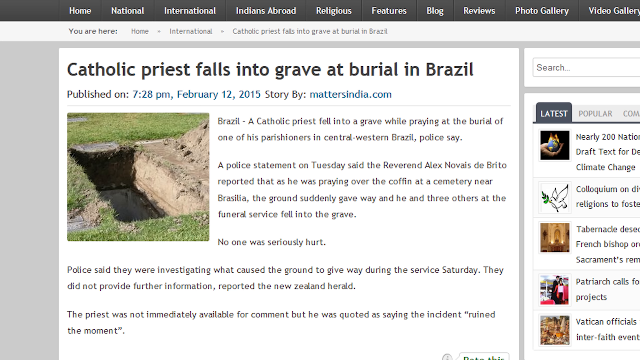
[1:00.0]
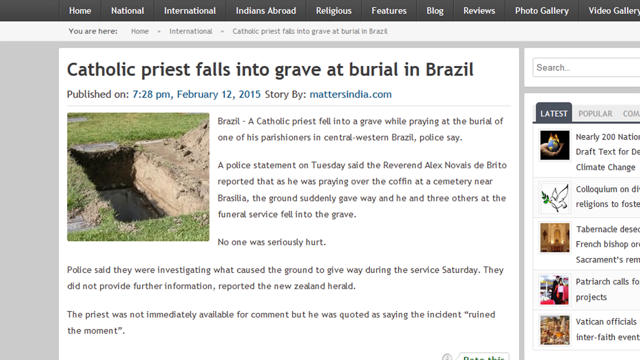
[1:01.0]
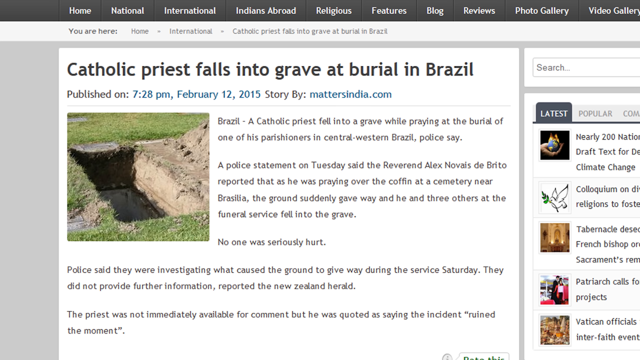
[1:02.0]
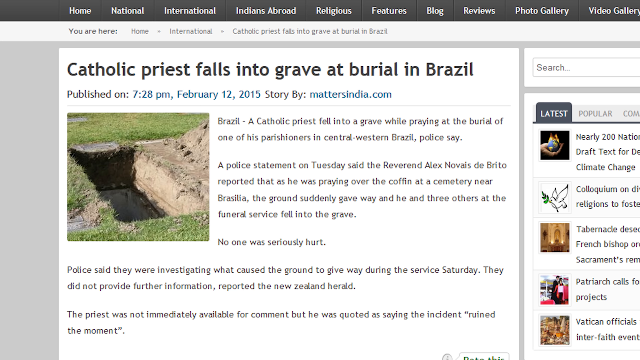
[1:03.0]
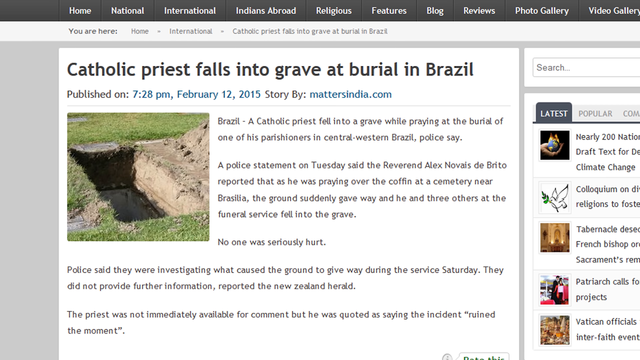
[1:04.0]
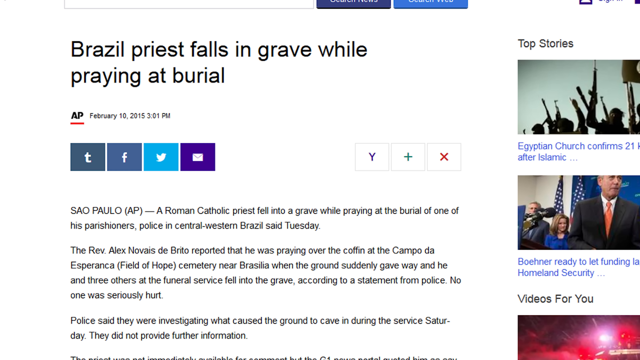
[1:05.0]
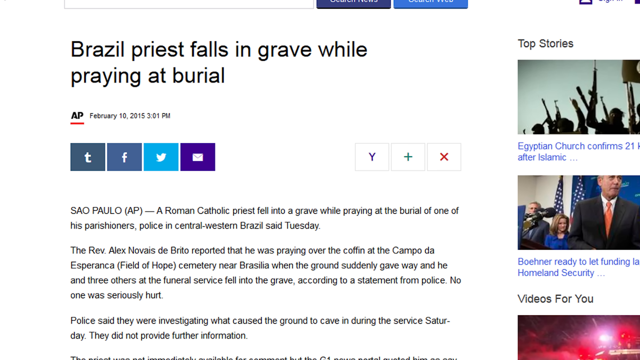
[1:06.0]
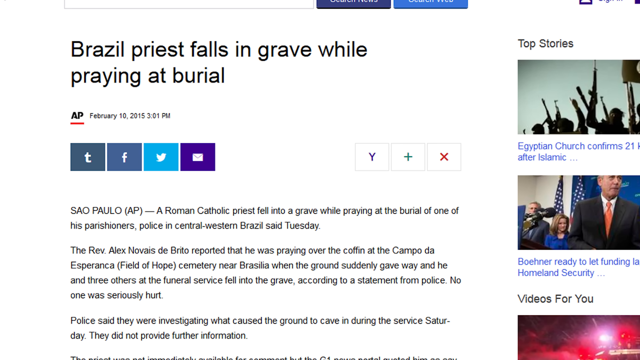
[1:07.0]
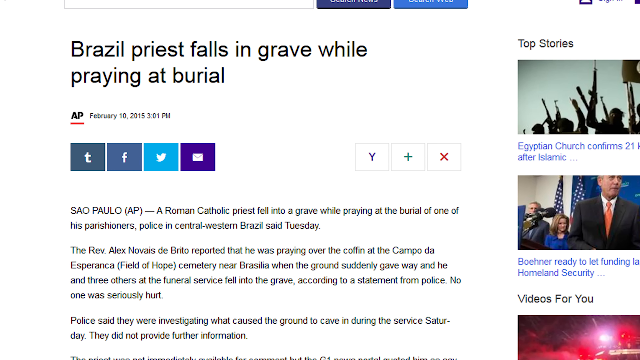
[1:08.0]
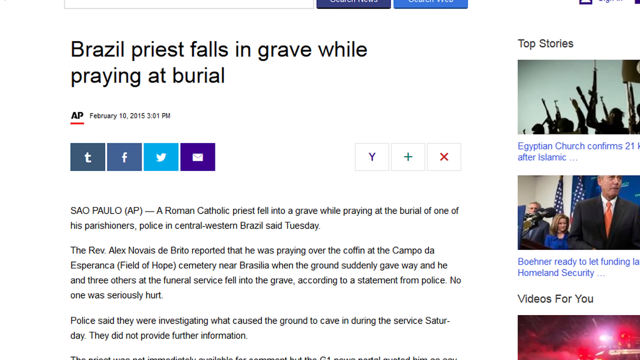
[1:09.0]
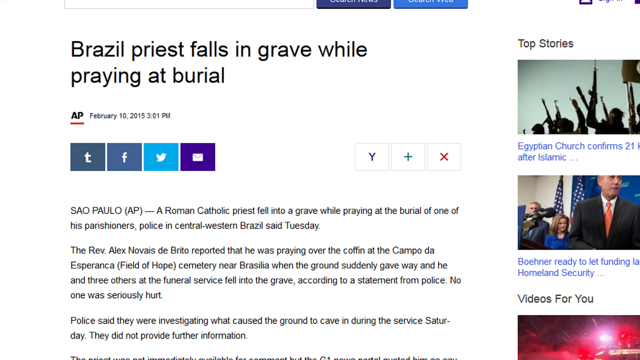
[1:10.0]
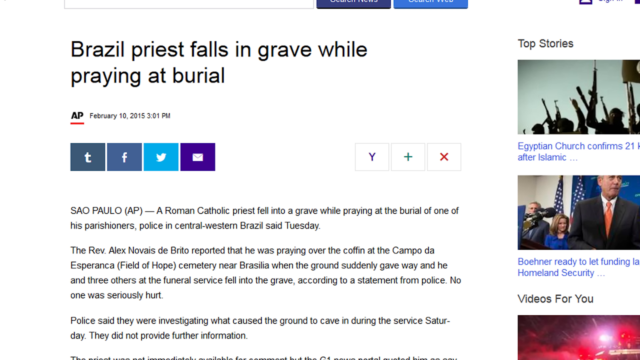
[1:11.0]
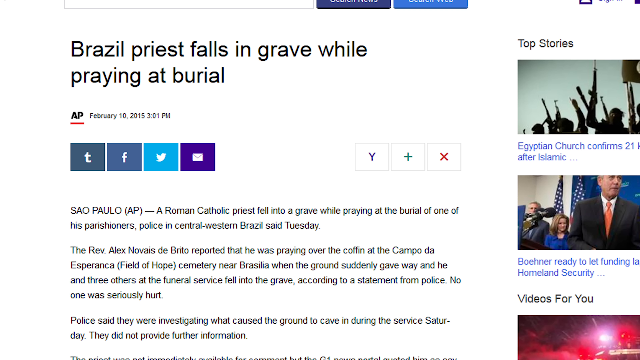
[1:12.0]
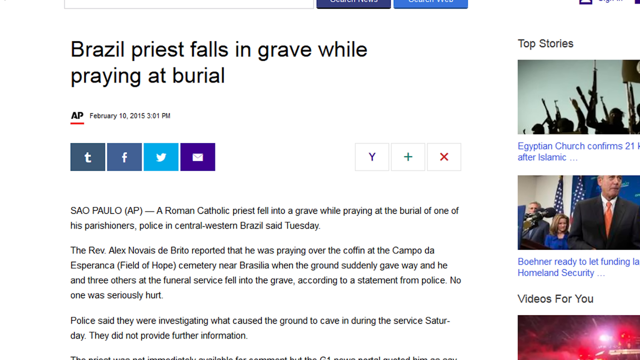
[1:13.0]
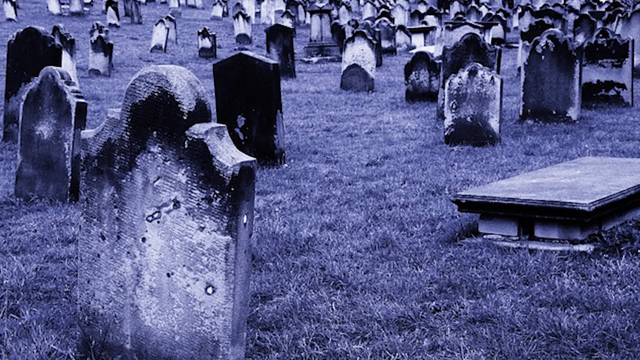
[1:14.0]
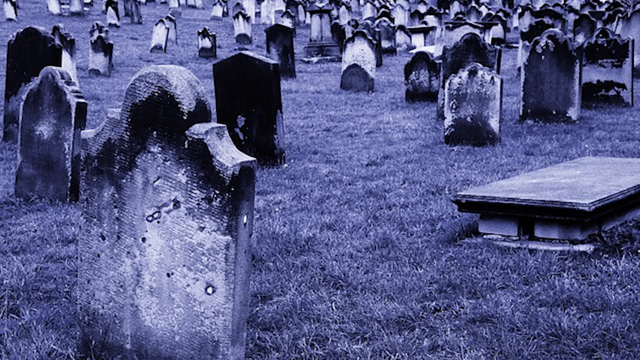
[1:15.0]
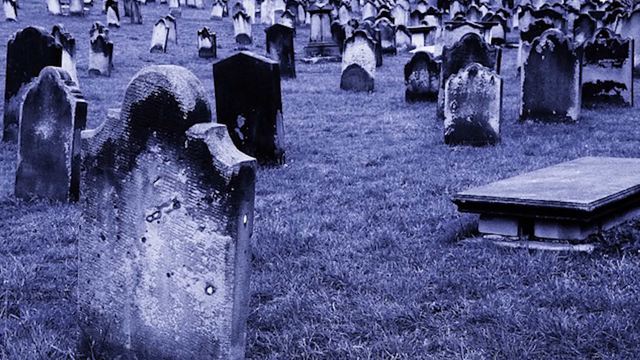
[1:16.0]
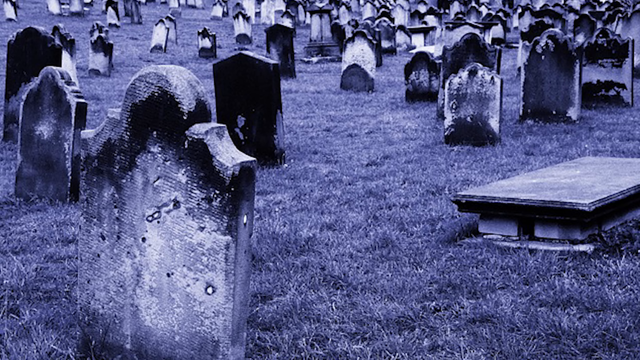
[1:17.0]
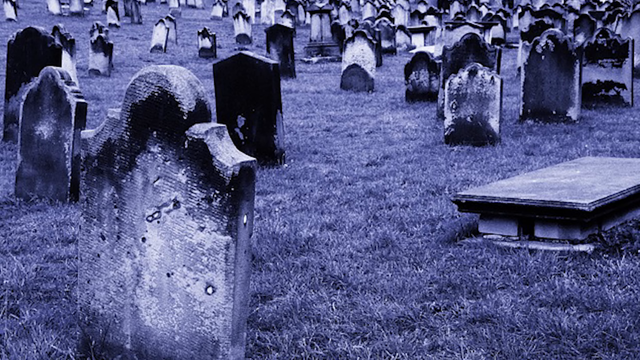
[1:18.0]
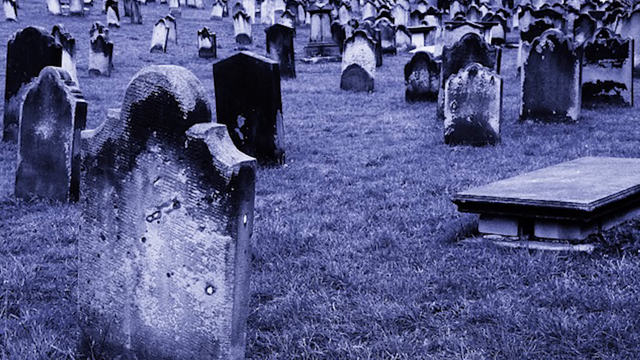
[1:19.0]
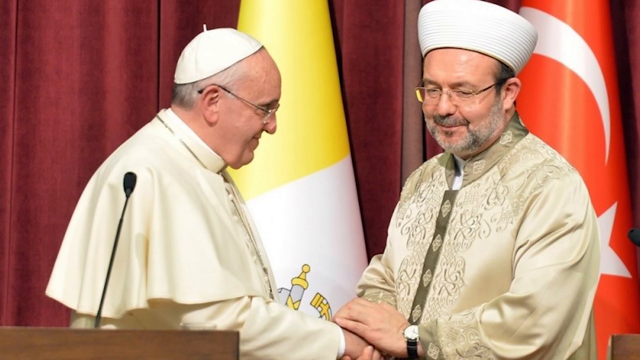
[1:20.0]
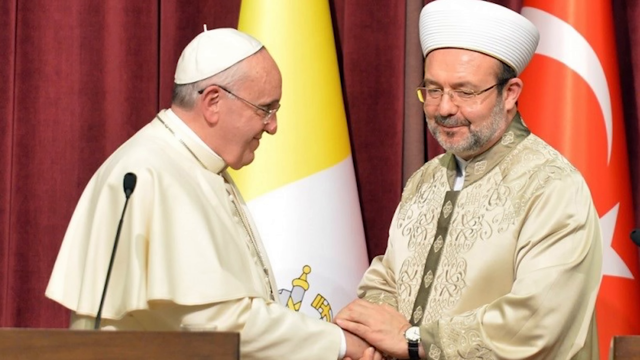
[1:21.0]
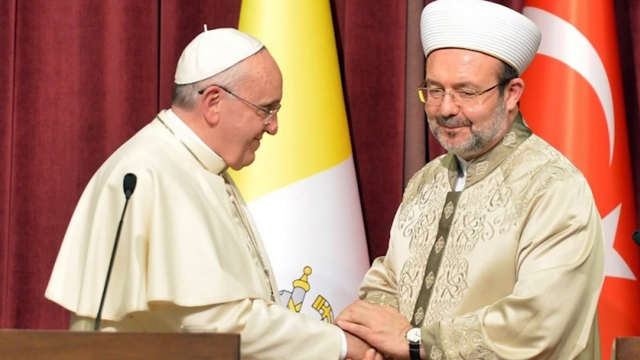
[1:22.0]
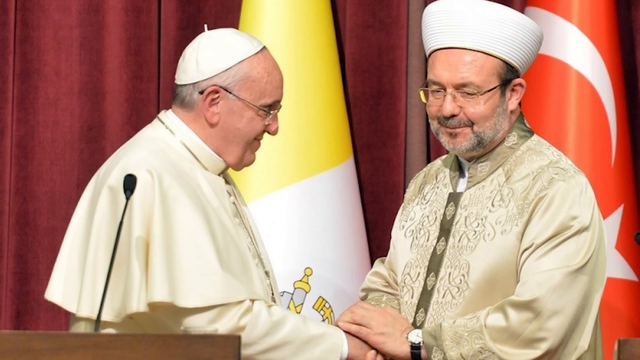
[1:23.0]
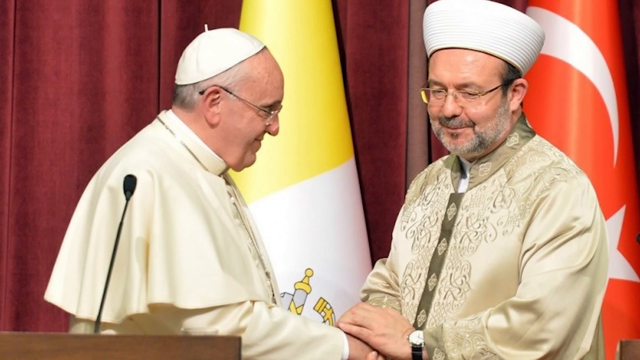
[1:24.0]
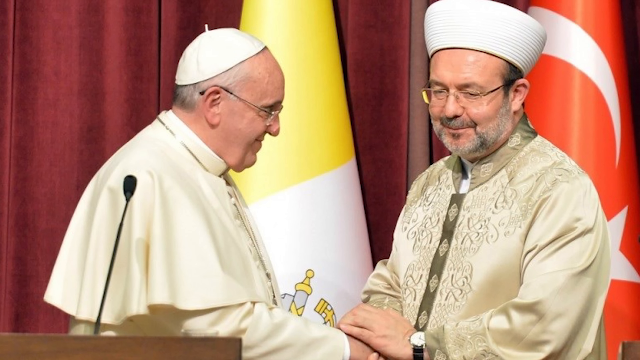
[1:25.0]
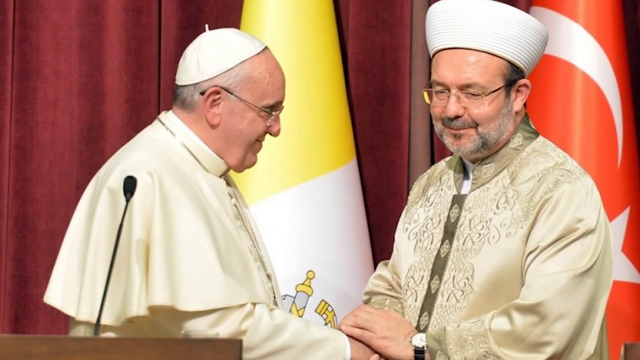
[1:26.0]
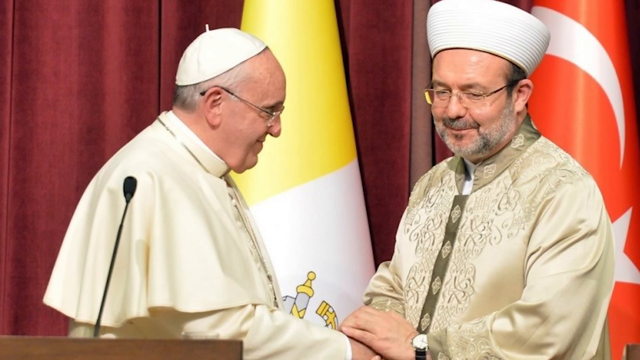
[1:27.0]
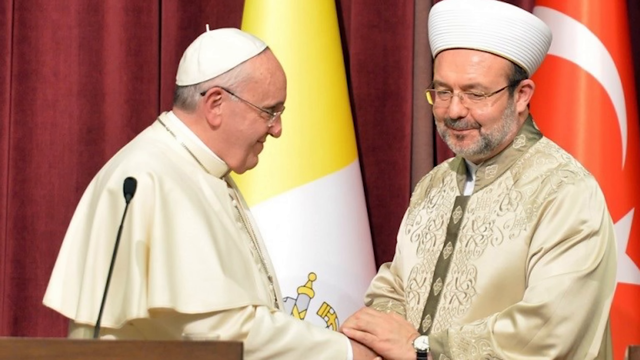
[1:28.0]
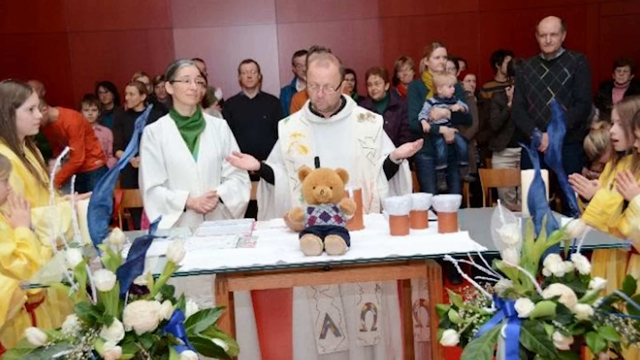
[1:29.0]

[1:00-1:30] On a white screen, the top reads "Brazil priest falls in grave while praying at burial". That goes away and a picture of a cemetery appears, all in dark black, gray and white, showing gray grass and dark gray, white and black headstones. It then cuts to a picture of a man on the left side of the screen wearing a white cap; he is the Pope, in his Pope gown, facing to his left. Standing in front of him is a man in a light golden colored robe with a tall white hat, and both men wear glasses. Behind them is a brown wall with two flags on flagpoles. The flag visible past the Pope is white and yellow and is not spread out, just hanging; the flag behind the other man is white and red, also hanging, and a white star can be made out on it.